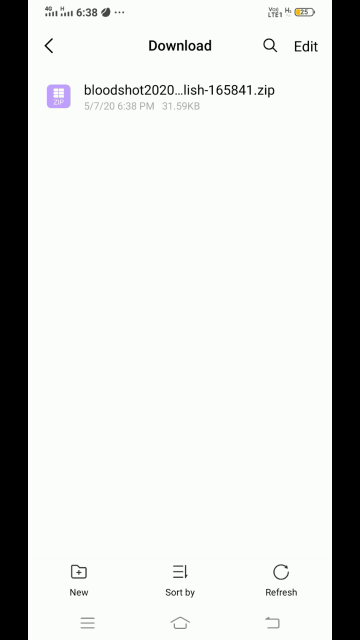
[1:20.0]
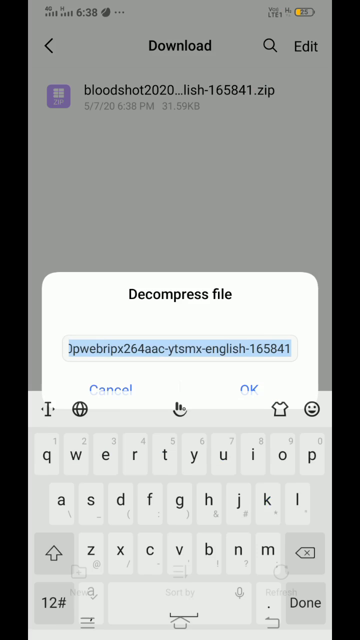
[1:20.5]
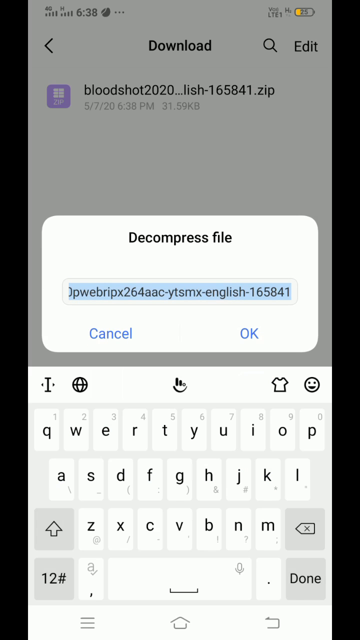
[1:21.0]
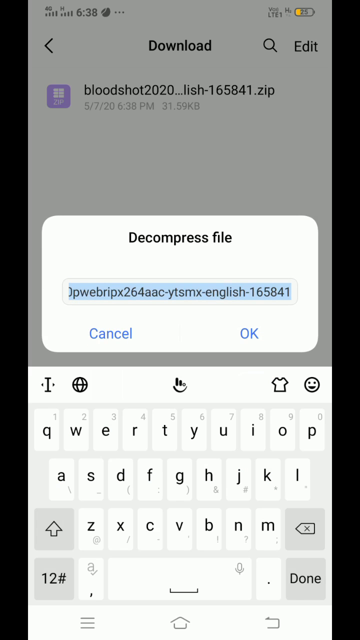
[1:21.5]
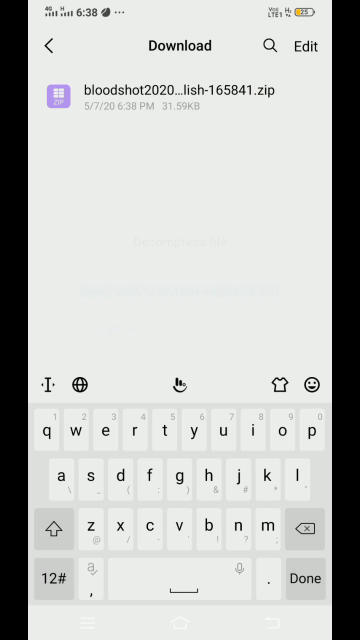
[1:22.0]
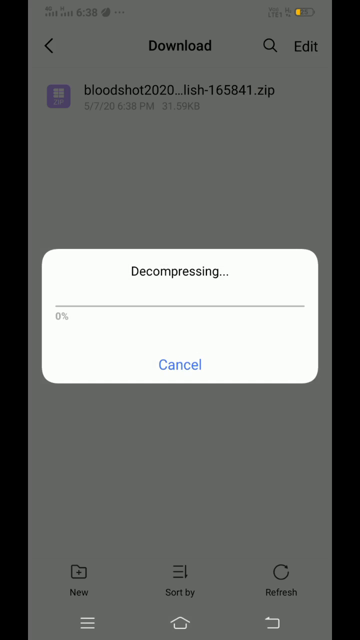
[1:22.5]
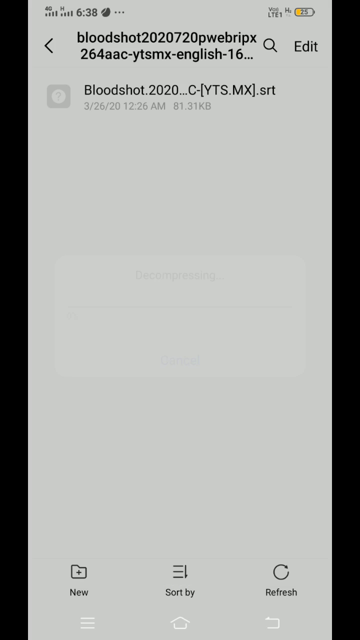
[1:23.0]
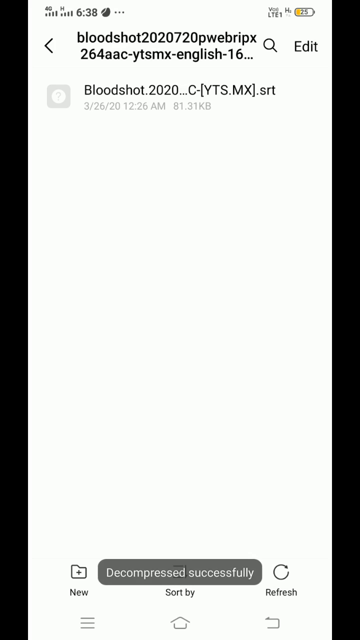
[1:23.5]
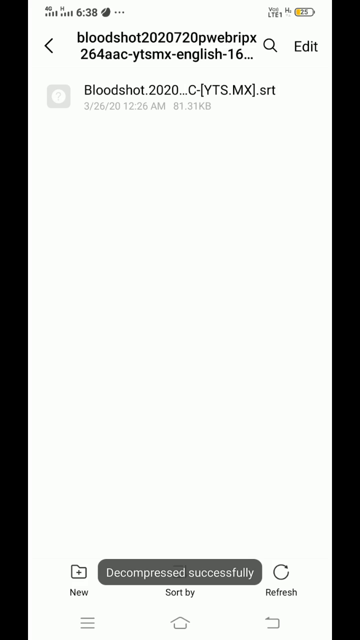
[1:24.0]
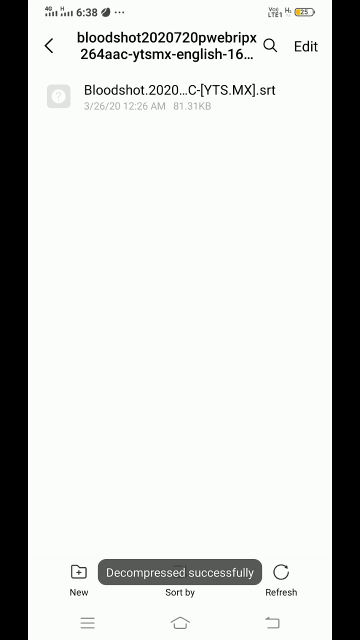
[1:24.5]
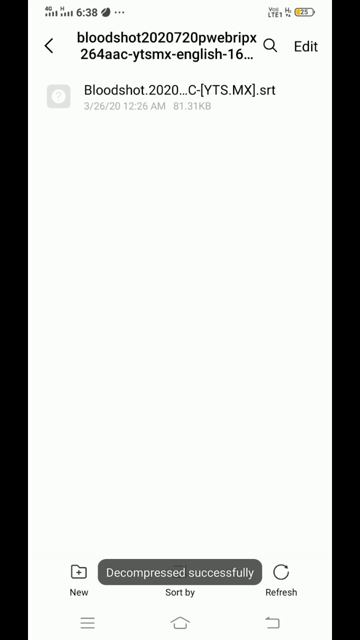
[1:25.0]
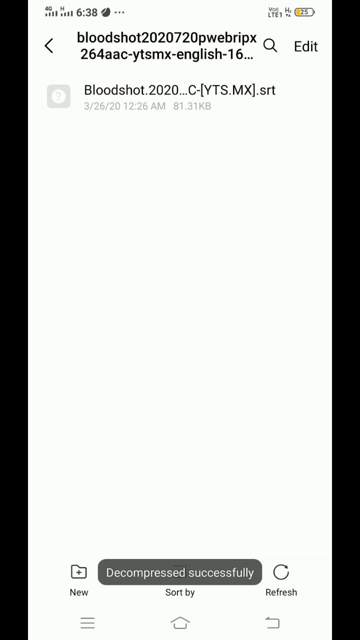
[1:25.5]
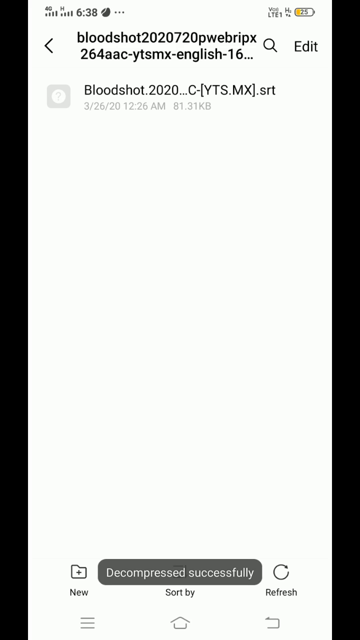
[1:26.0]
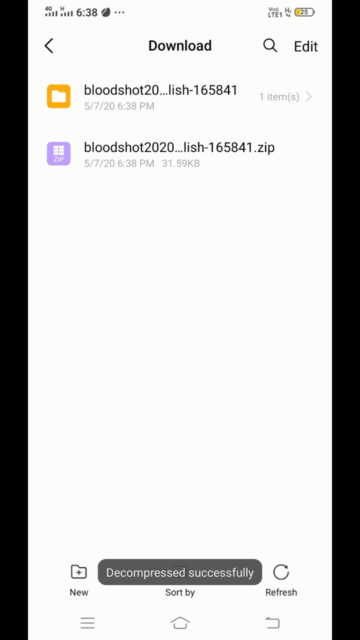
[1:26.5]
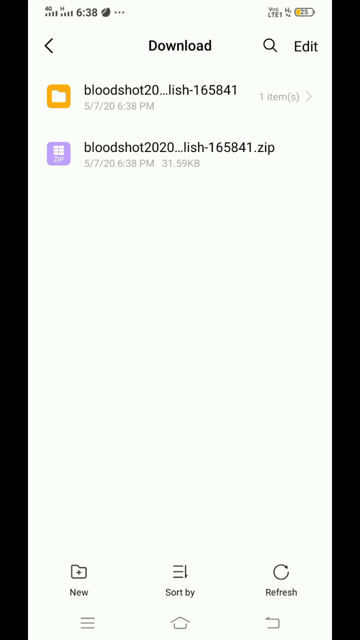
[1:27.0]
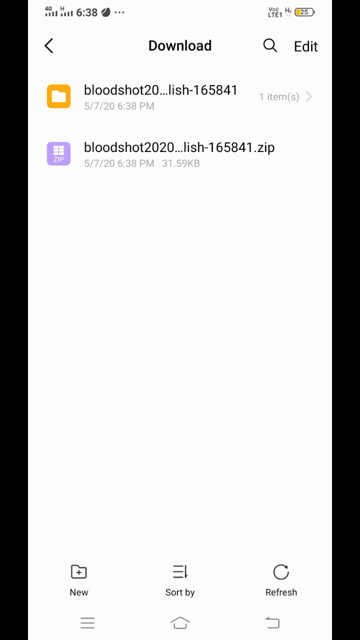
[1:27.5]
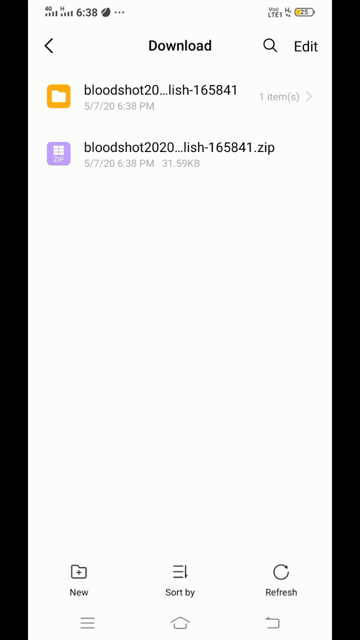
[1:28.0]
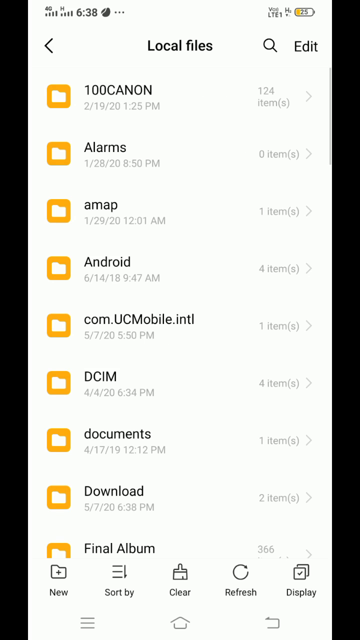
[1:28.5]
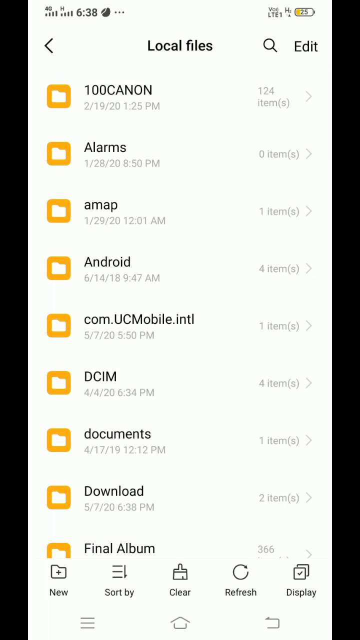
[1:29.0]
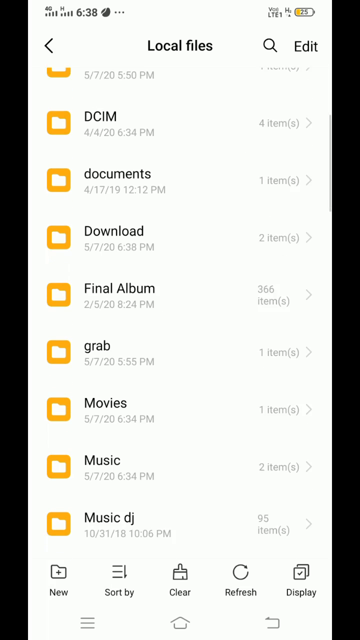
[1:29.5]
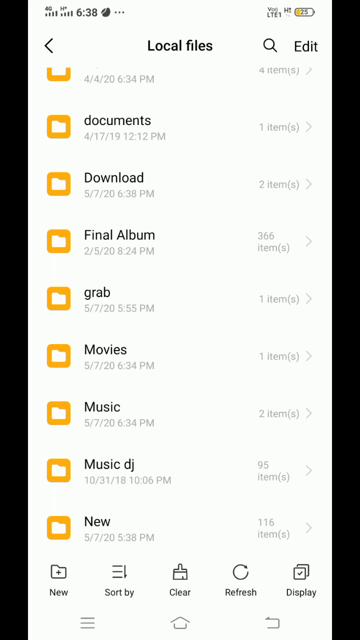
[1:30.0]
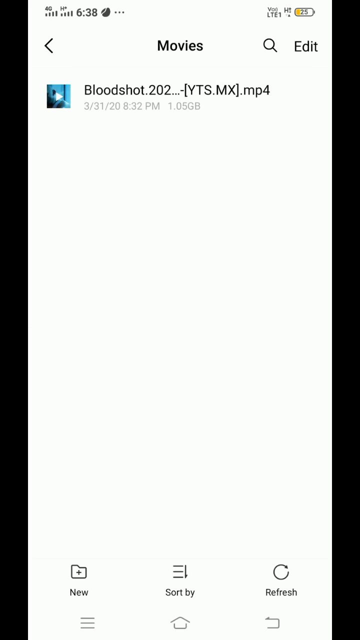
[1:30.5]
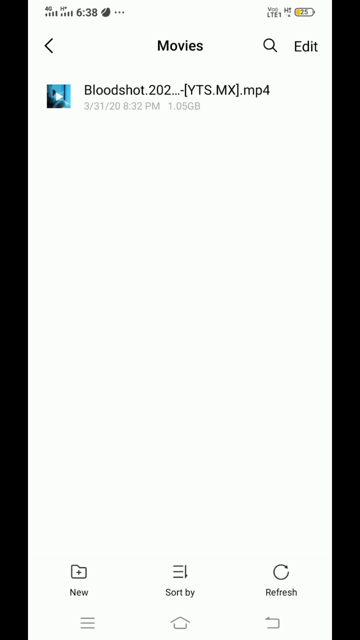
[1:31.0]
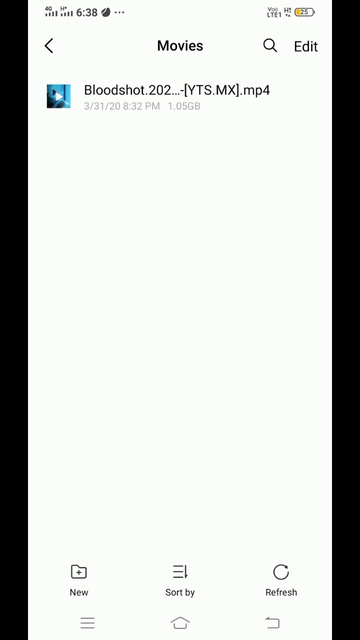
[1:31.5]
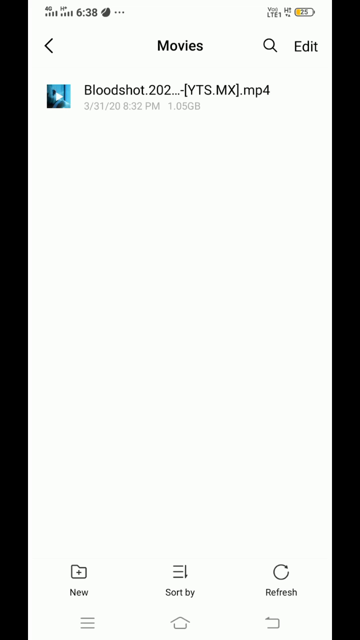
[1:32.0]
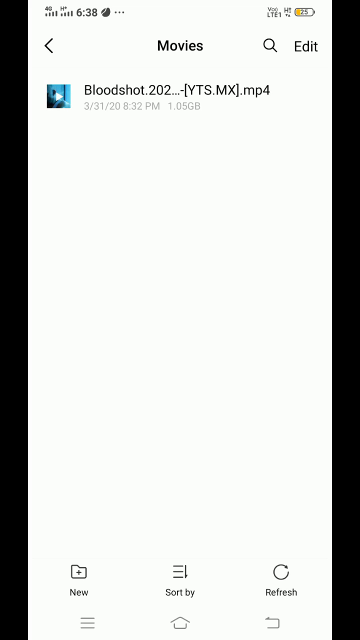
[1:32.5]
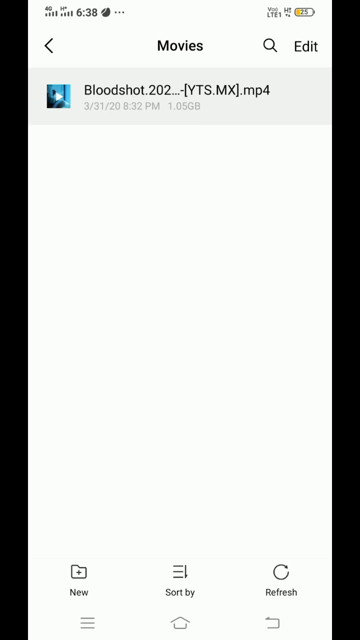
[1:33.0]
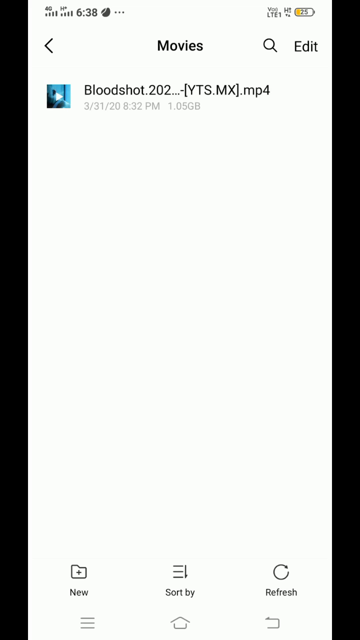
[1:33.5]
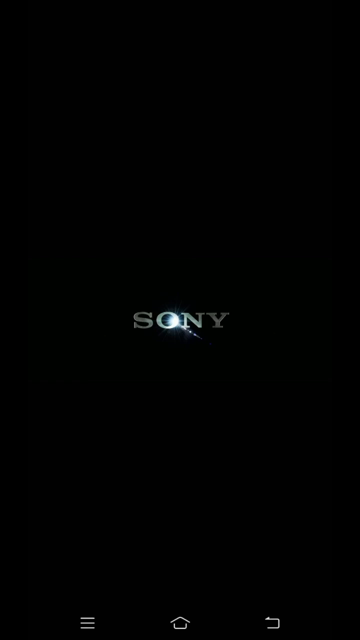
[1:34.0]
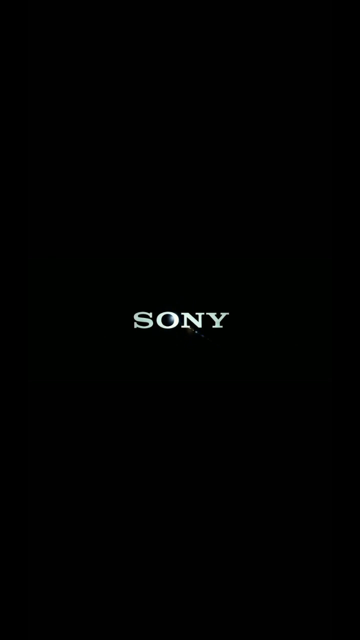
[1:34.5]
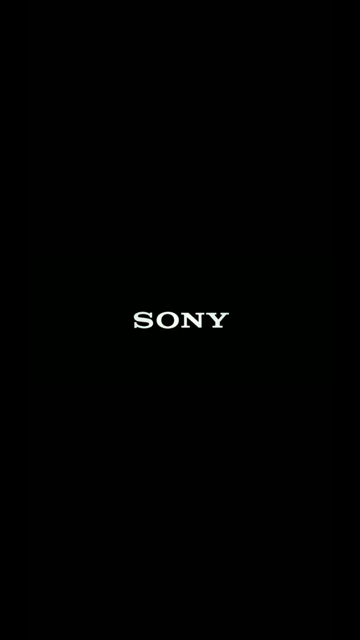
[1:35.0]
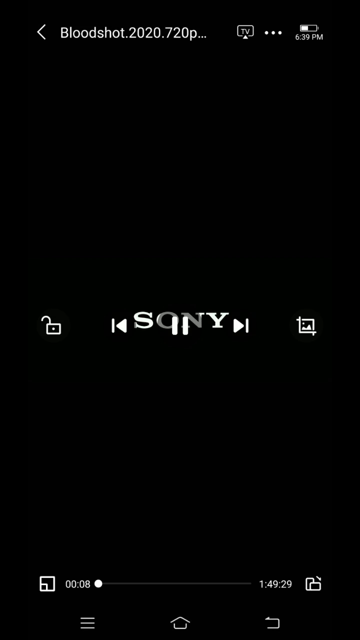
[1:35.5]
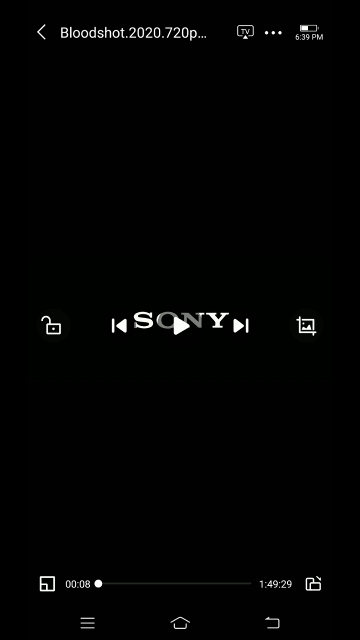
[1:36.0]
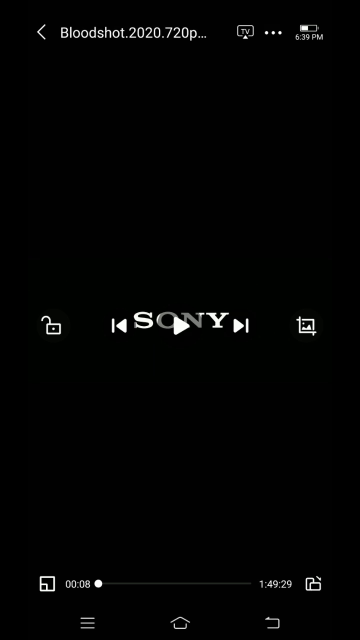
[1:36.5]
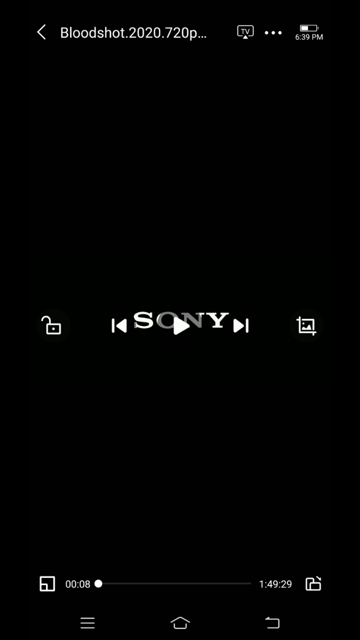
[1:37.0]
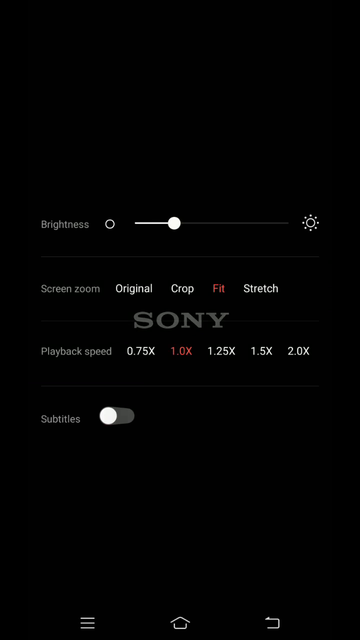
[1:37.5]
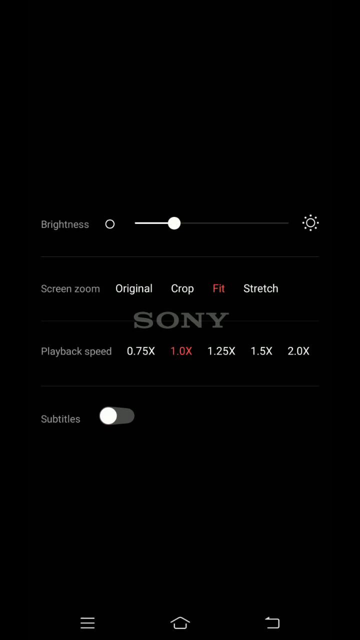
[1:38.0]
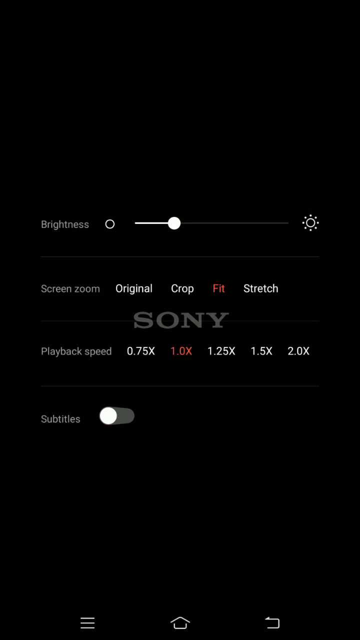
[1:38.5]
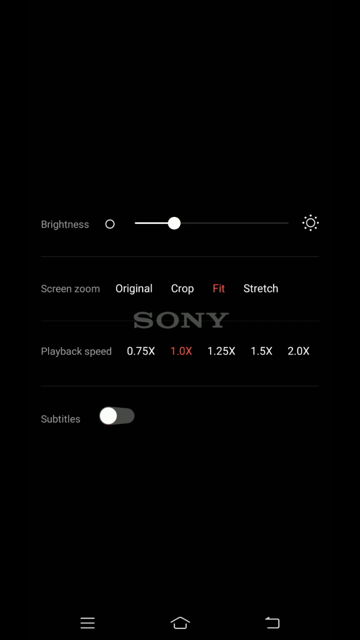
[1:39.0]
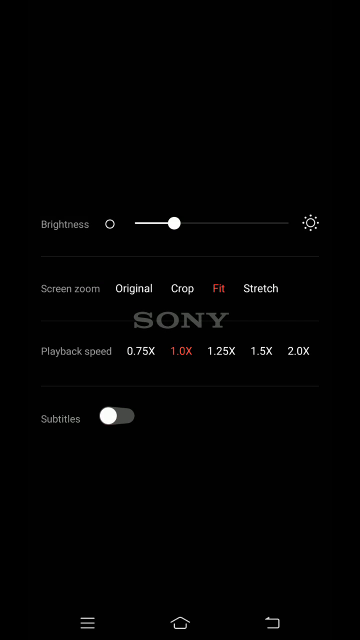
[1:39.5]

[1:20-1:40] The file Bloodshot2020 flashes and a white box appears up from the bottom of the screen with 'decompress file' written at the top. It sits in the middle of the screen on top of the previous screen, with options of 'cancel' or 'OK' beneath the file name, which is highlighted in blue. Below this, the keypad is showing at the bottom of the screen. The decompress file box minimizes and fades out in the middle of the screen, and a new one with the same dimensions fades in, saying 'decompressing' with a grey progress bar below at 0%. Immediately, the view cuts to another screen with the file listed along the top and the words 'decompressed successfully' at the bottom within a dark grey box. Back on the download page there are now two files: above the original is another with almost the same title but a yellow folder icon to the left, and to the right '1 items', as if to show what is inside the folder. The view moves back to local files and 'movies' is selected. In the movies folder the bloodshot file name appears with the blue movie icon to the left. That file flashes as if selected, and the view cuts to a black screen with the 'Sony' film logo in white in the centre. Controls then appear on the screen: play, back, forward, and the bloodshot title at the top. Other controls follow, including brightness, screen zoom, playback speed and subtitles, presented in horizontal rows. A toggle switch to the right of 'subtitles' flicks across to the right, turning red.